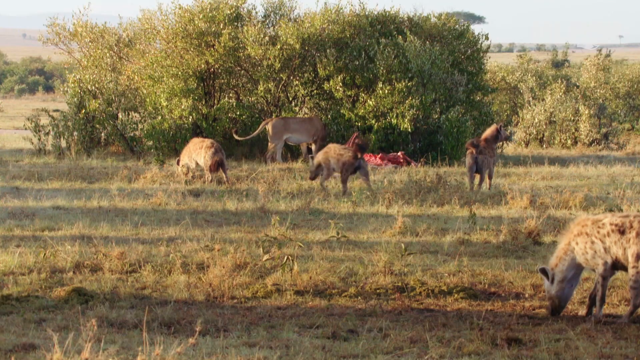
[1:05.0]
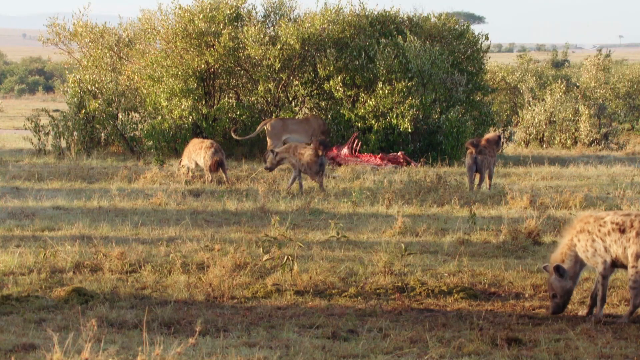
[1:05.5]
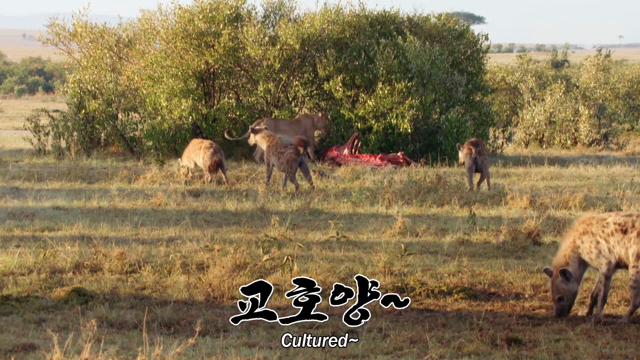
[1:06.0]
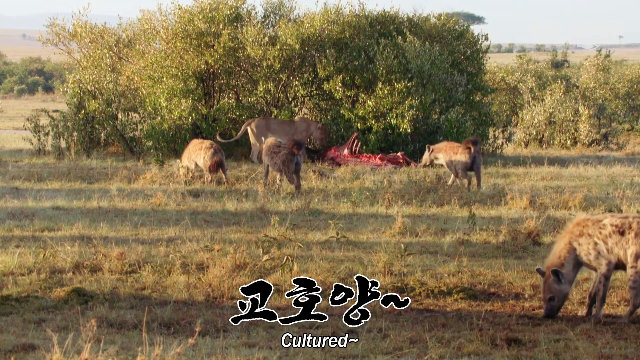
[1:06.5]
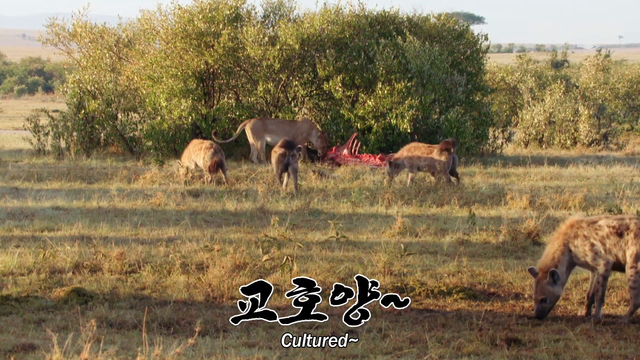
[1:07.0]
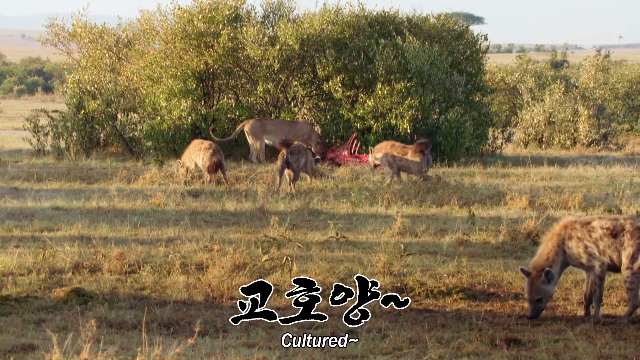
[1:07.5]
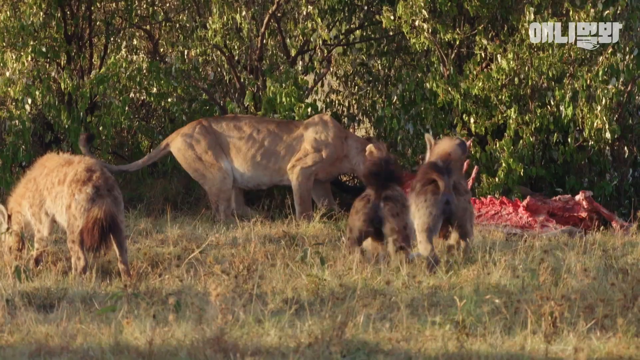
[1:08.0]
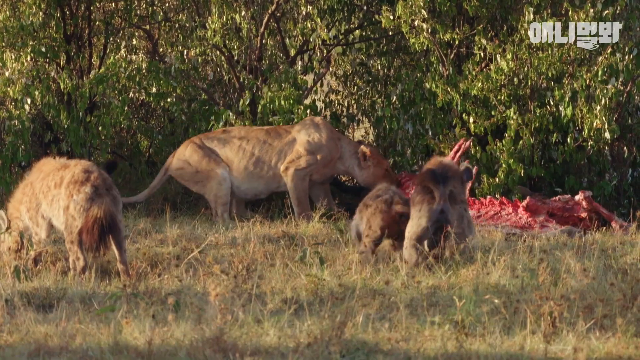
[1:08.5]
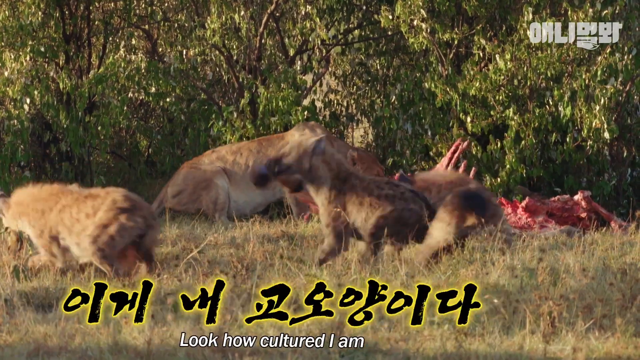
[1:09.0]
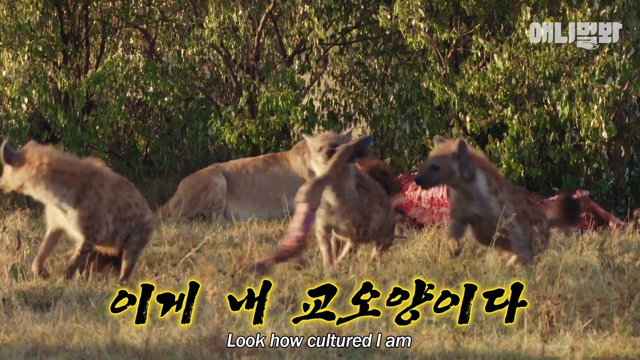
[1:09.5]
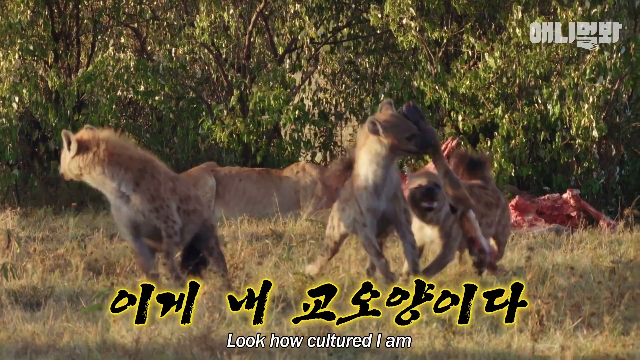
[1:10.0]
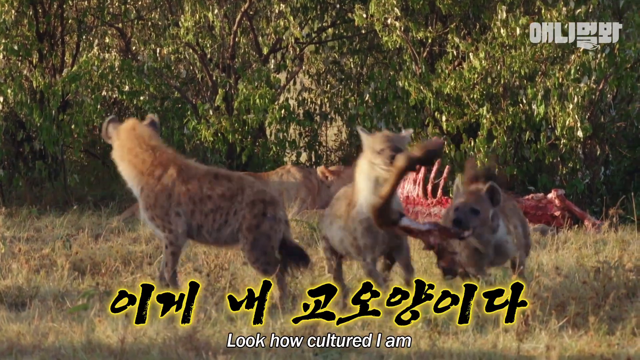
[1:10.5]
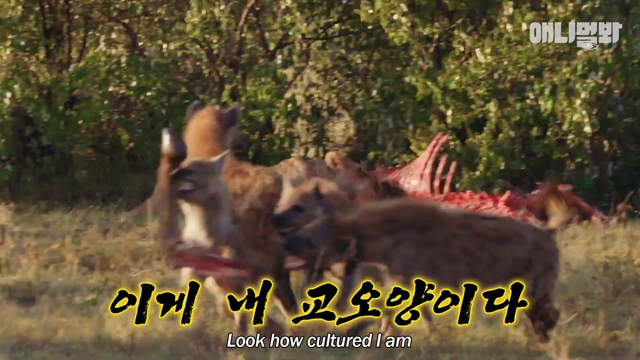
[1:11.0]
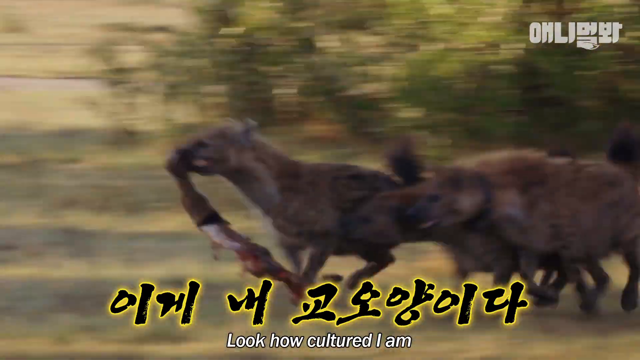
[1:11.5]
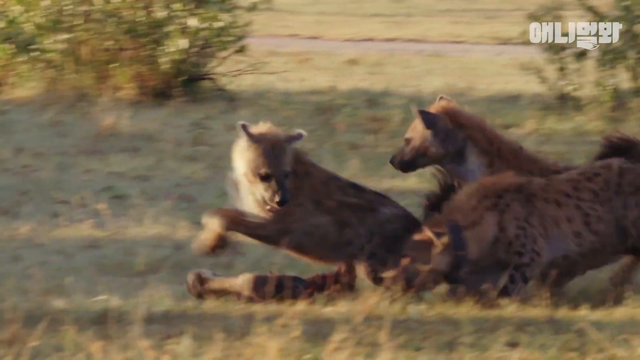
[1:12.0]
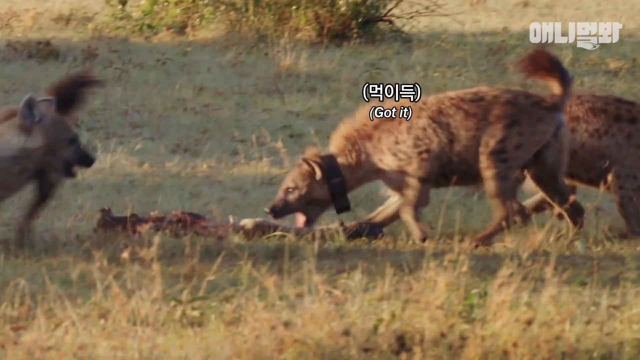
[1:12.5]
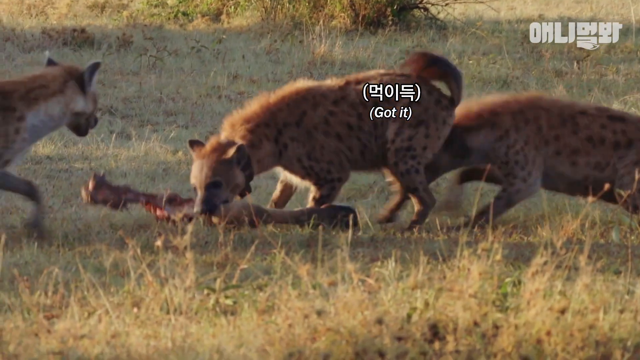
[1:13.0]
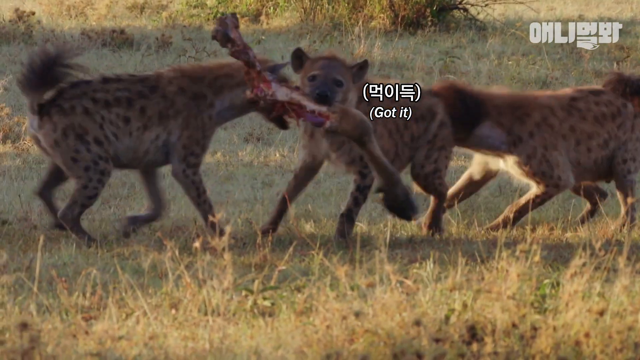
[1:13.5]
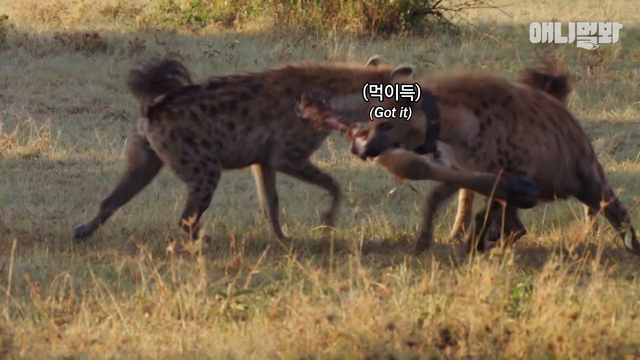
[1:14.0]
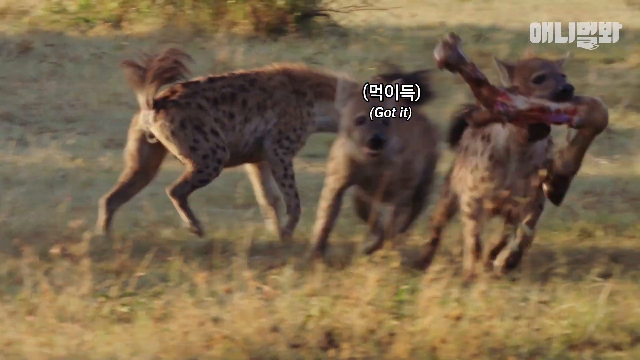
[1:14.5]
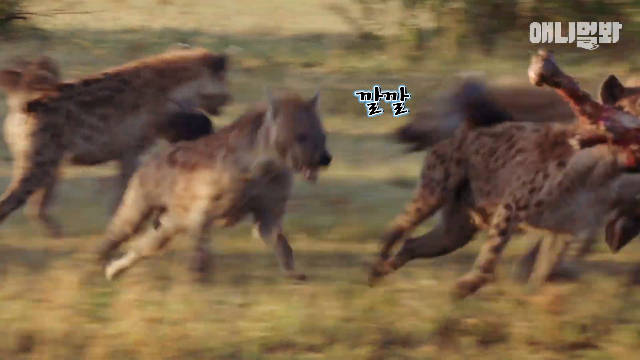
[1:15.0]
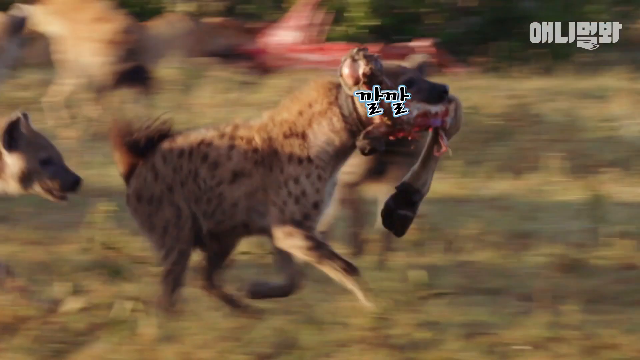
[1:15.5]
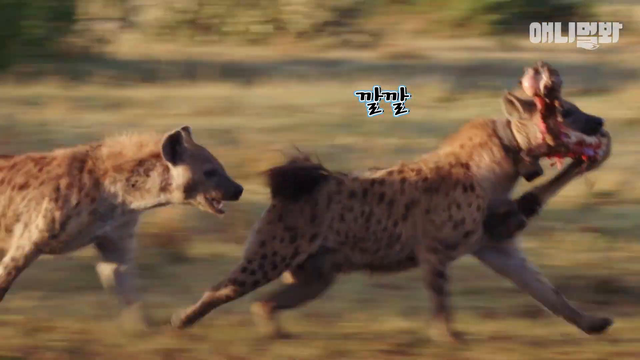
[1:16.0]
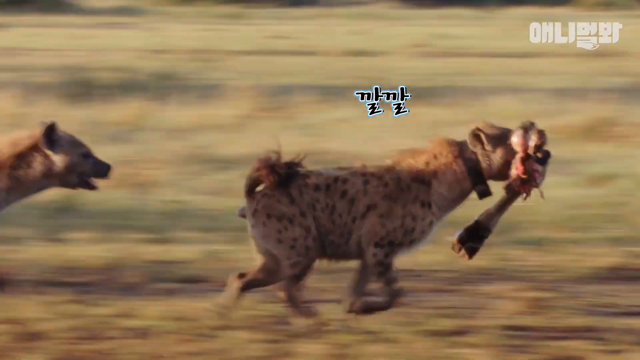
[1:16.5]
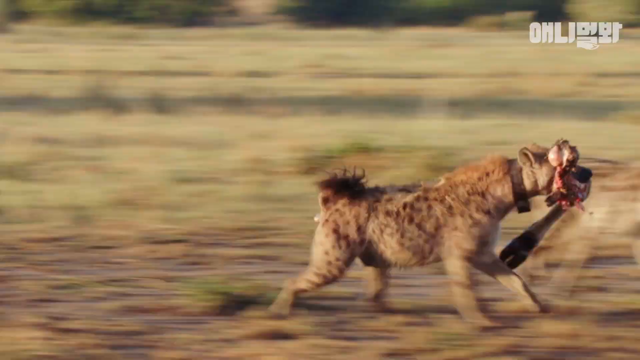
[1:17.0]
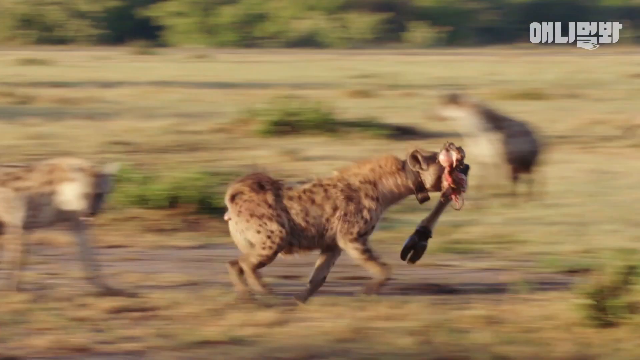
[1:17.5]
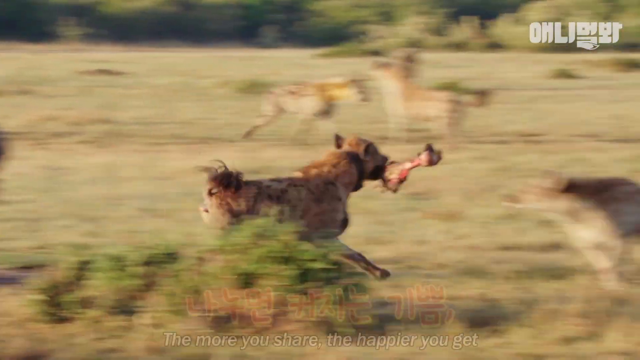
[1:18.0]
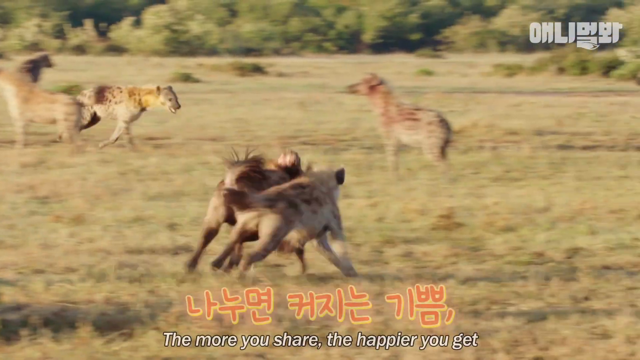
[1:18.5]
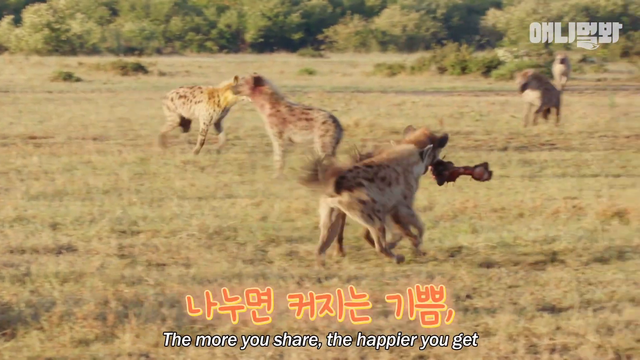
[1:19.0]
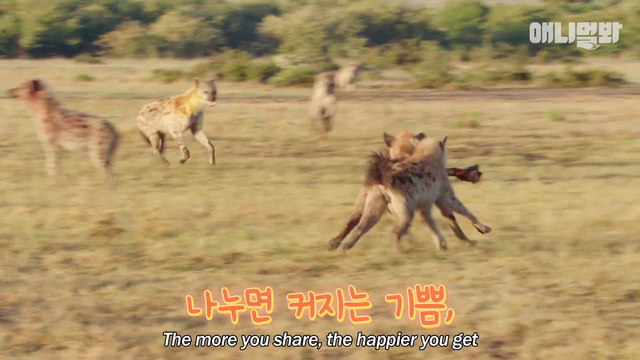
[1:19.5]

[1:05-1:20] The hyenas have stolen part of the carcass, appearing to have blindsided the lioness. One hyena has taken a leg of the carcass in its mouth and runs off with it alongside its companions; the group seems to be around two or three. The caption indicates that the hyenas are mocking the lion and running off with their prize. The lion can't quite be made out, while the hyenas run around.